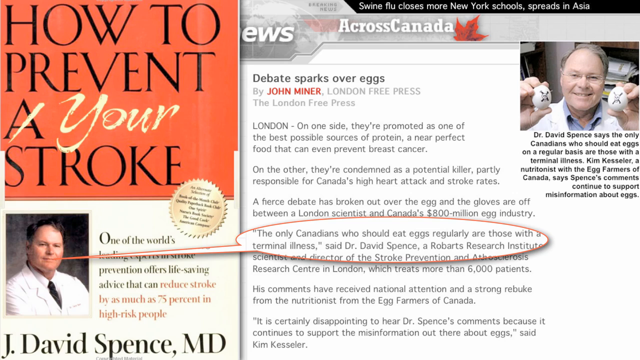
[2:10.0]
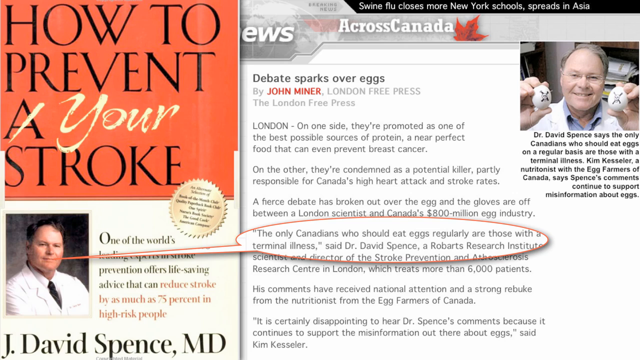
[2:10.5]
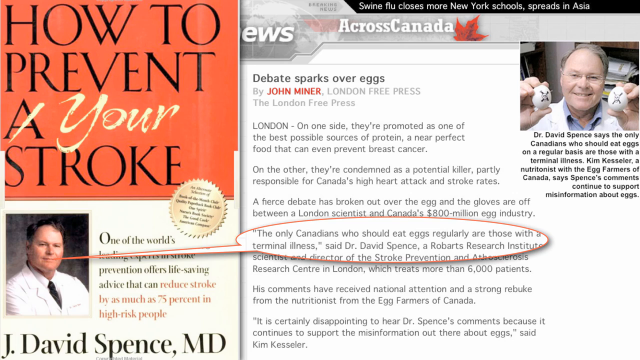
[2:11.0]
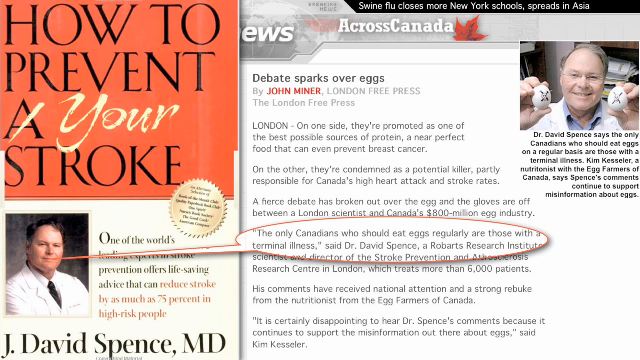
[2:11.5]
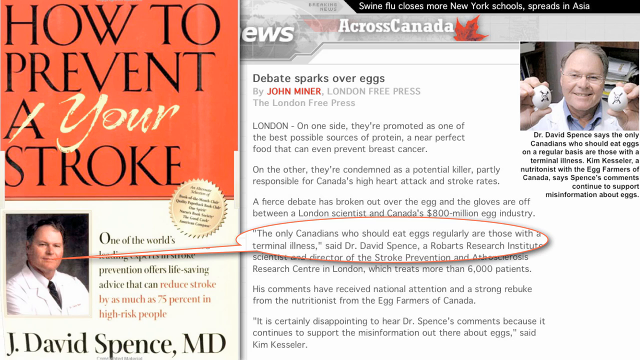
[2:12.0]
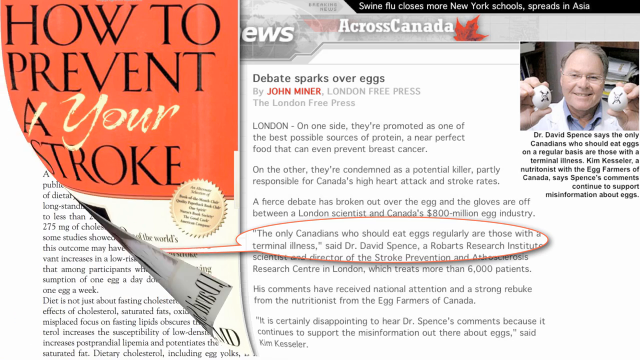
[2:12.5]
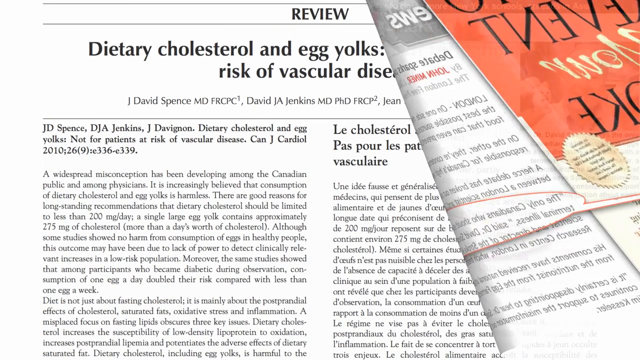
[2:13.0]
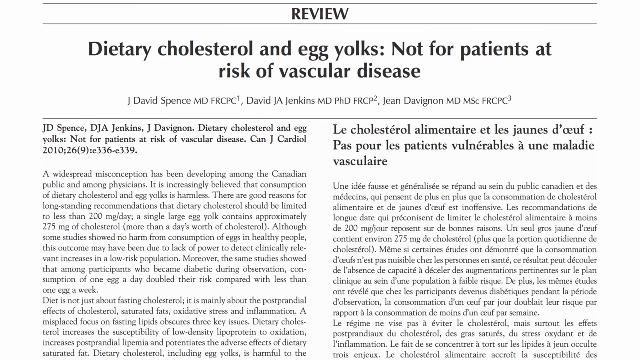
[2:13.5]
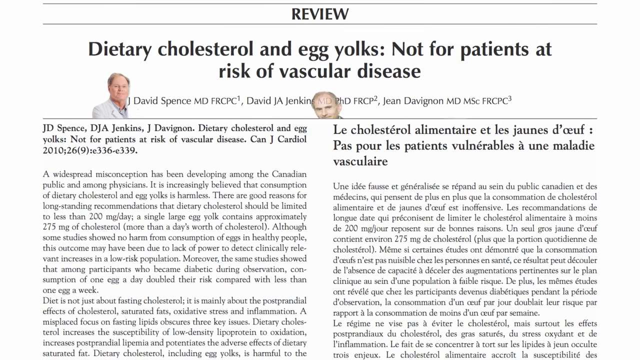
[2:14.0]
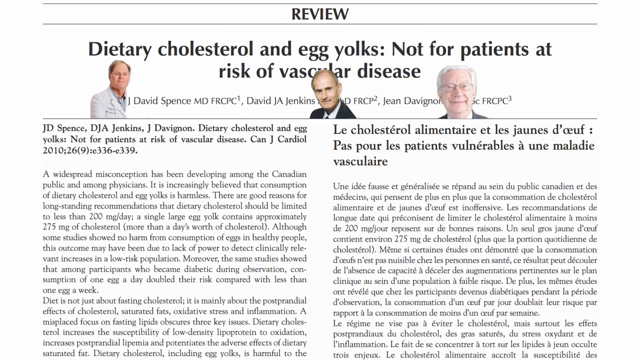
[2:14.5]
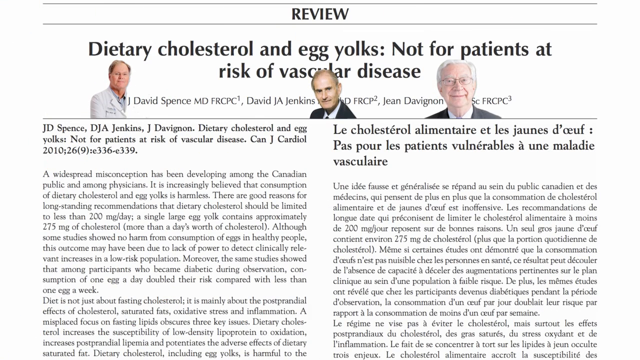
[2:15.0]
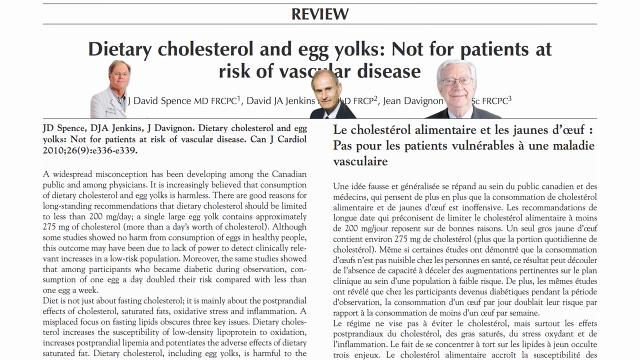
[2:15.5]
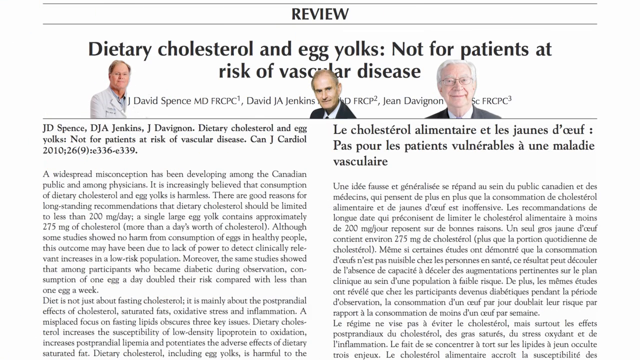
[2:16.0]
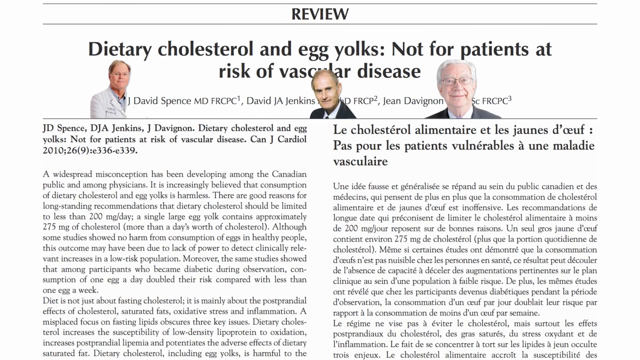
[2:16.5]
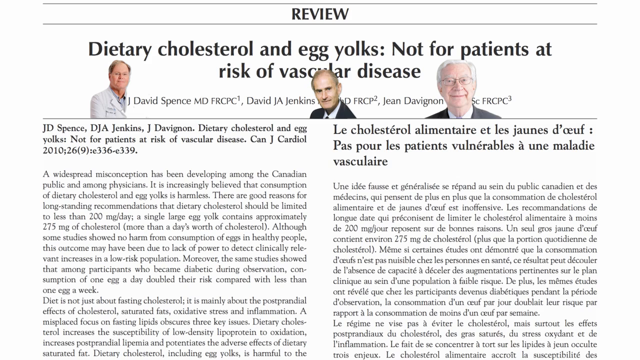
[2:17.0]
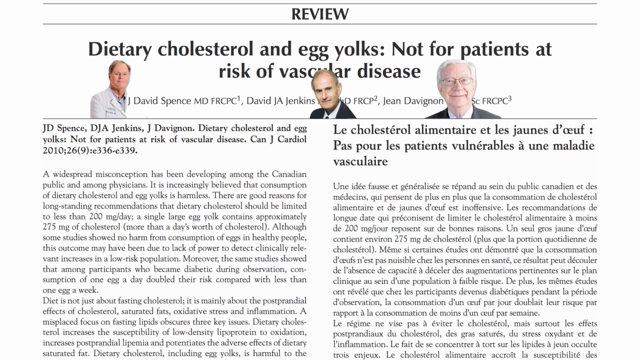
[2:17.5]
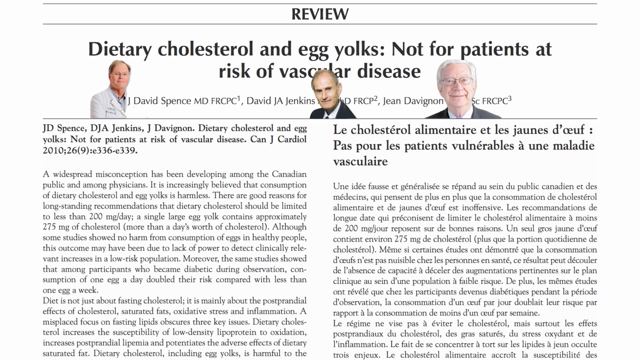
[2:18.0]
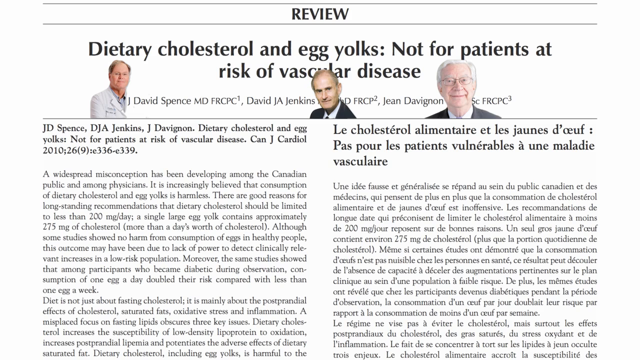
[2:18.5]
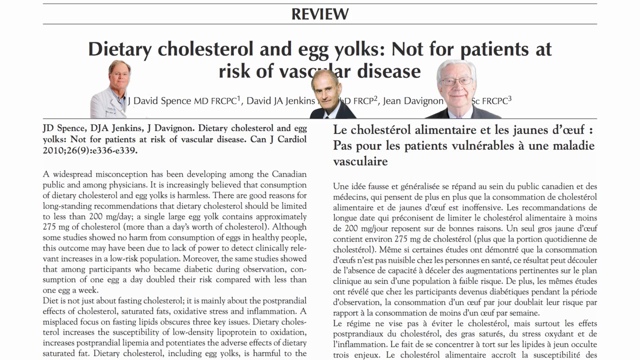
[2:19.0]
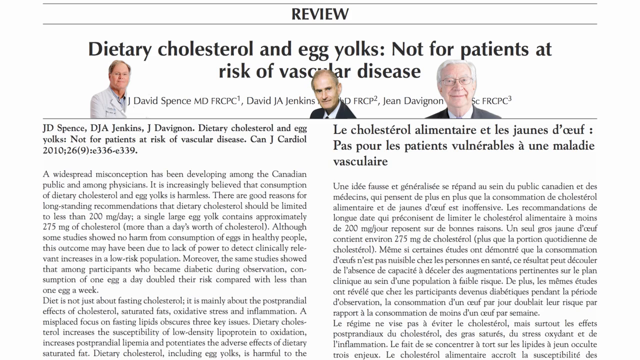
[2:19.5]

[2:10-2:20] The Across Canada website is on screen, with the title "CNews" and "Debate sparks over eggs". The focus of the page is a book by Dr. David Spence titled "How to Prevent Your Stroke", featured on the left-hand side of the screen. A page-turn transition then begins in the bottom left corner; the page folds upward and moves to the right, revealing behind it an image of a review titled "dietary cholesterol and egg yolks not for patients at risk of vascular disease". The article has two columns of text, one in English and one in French.